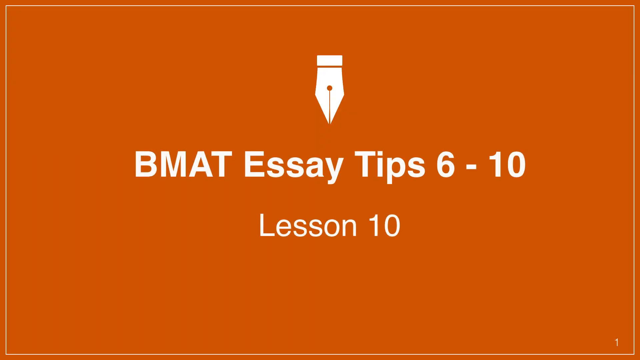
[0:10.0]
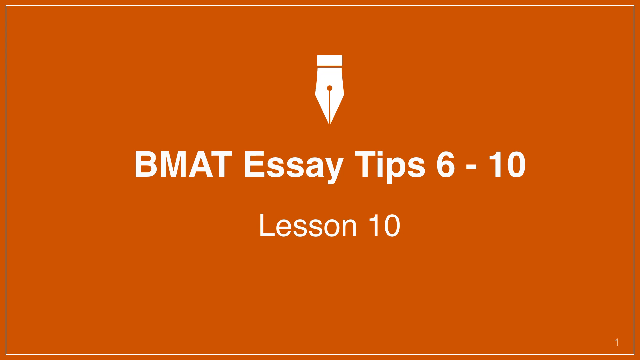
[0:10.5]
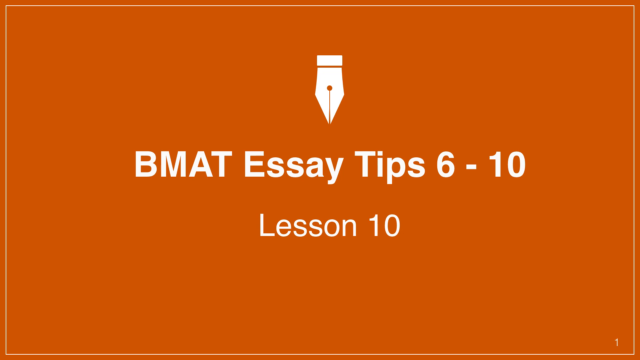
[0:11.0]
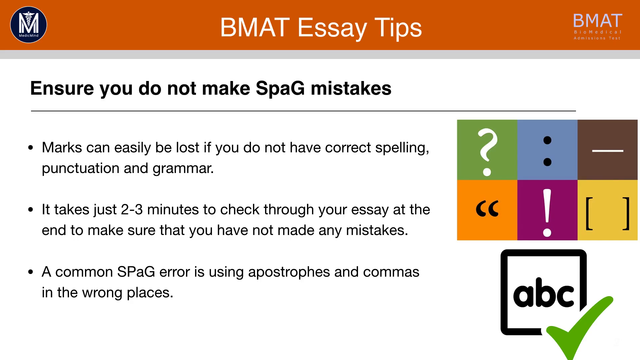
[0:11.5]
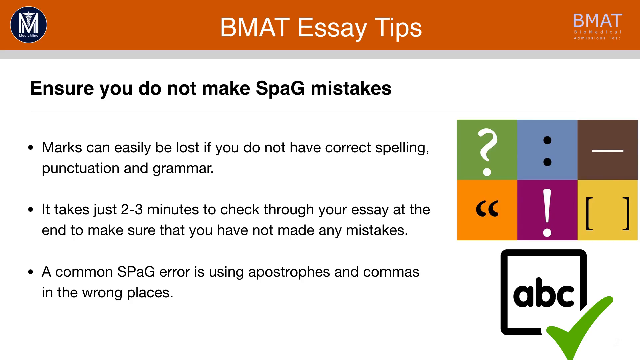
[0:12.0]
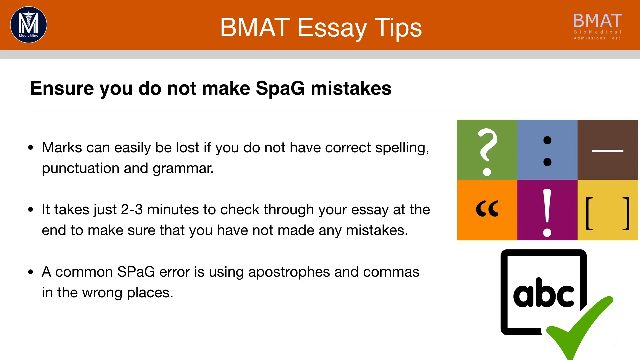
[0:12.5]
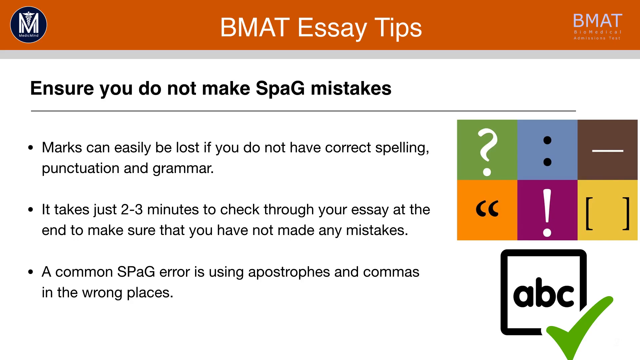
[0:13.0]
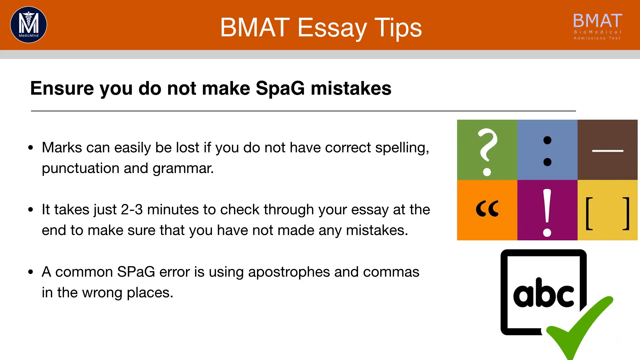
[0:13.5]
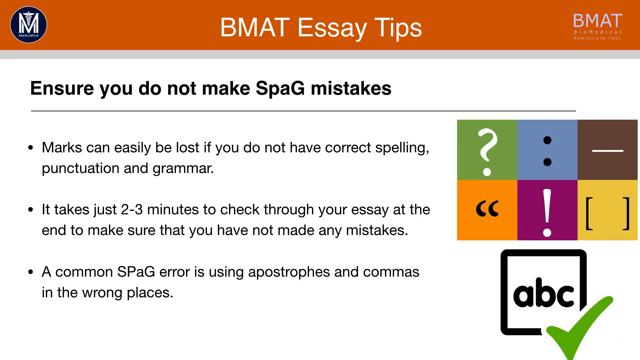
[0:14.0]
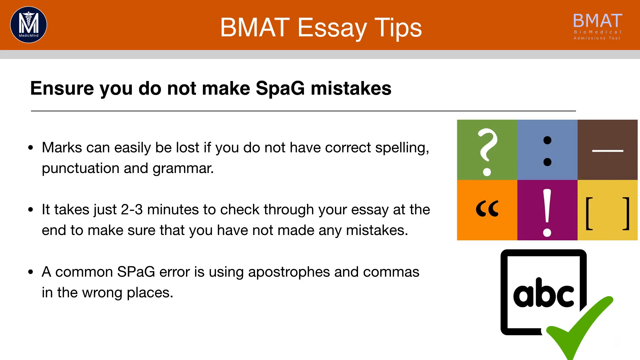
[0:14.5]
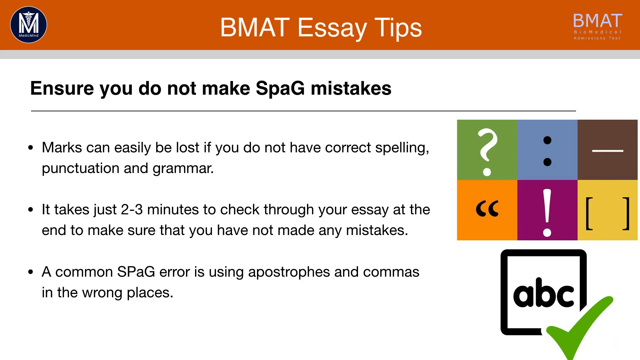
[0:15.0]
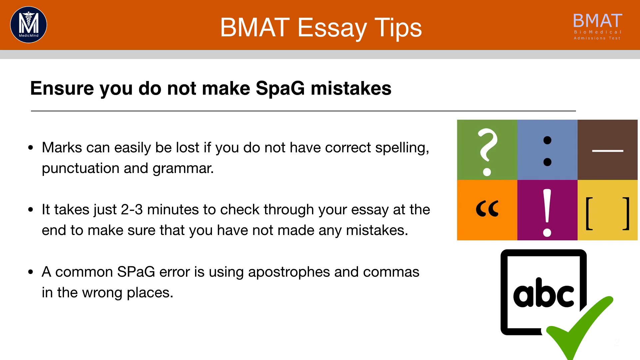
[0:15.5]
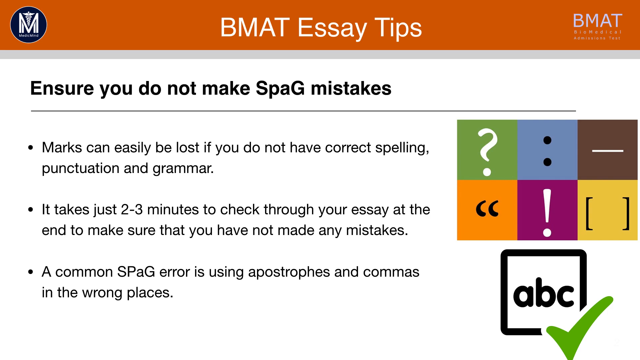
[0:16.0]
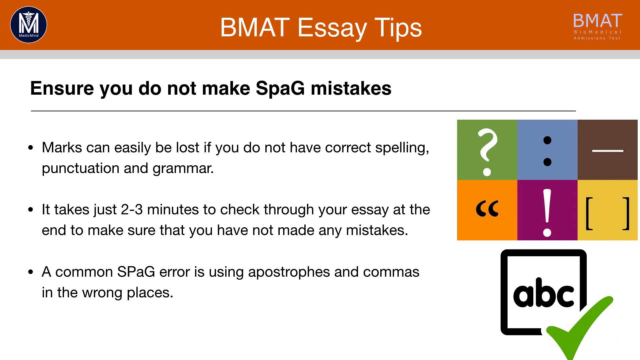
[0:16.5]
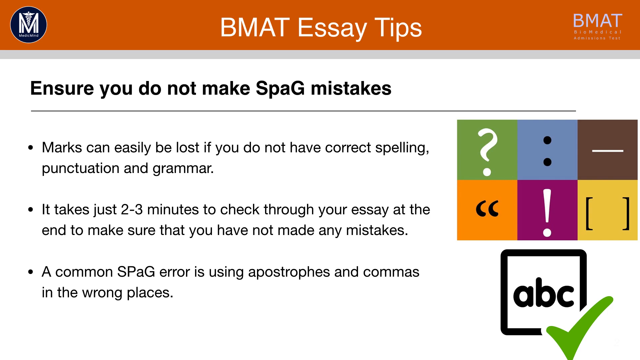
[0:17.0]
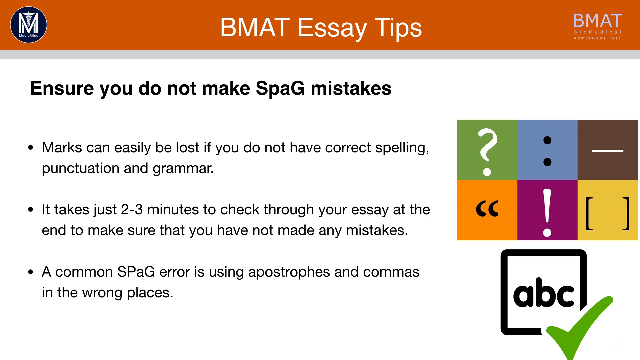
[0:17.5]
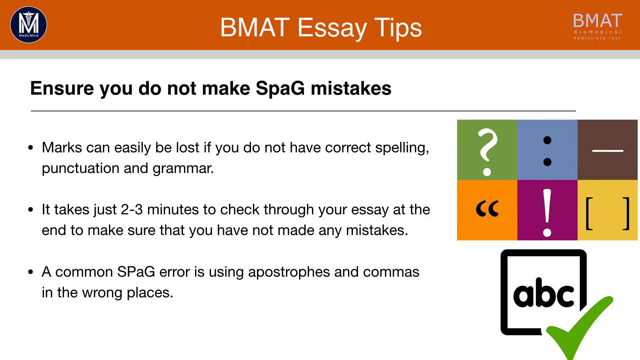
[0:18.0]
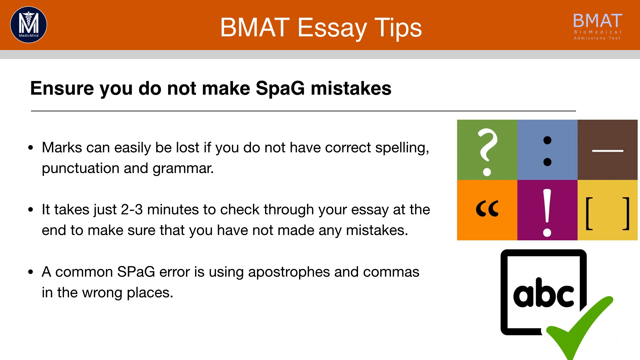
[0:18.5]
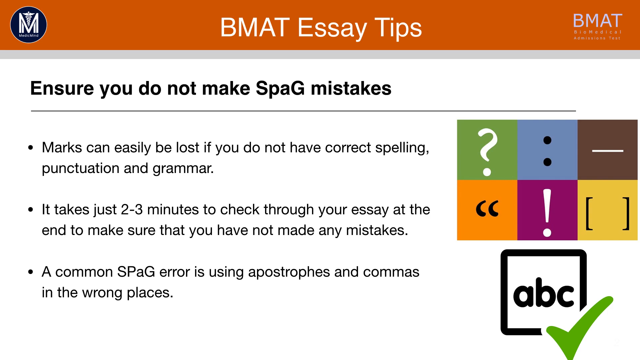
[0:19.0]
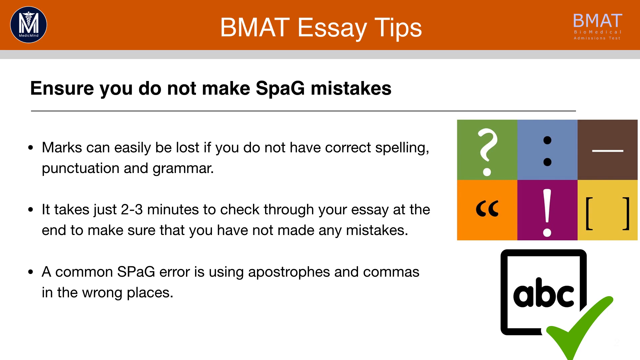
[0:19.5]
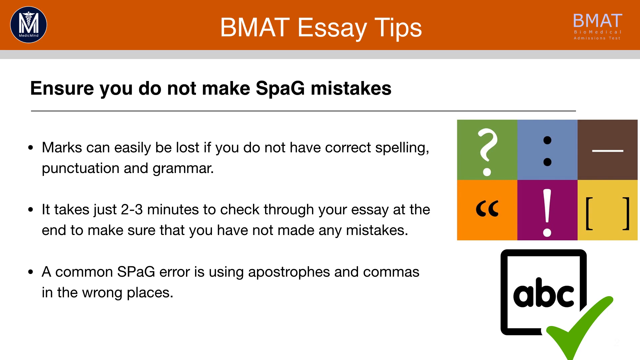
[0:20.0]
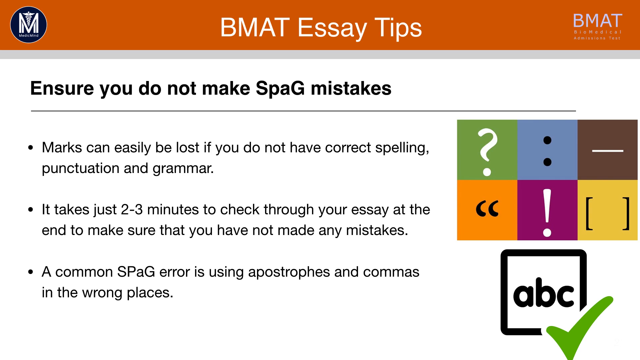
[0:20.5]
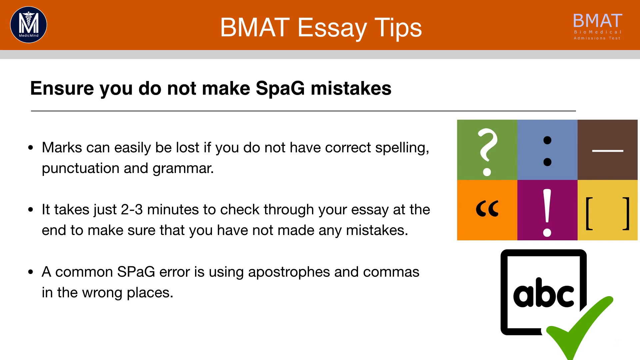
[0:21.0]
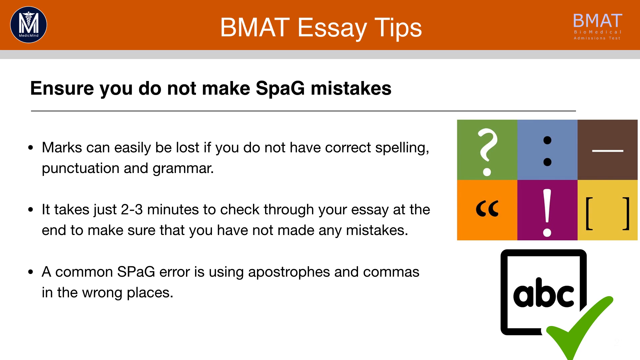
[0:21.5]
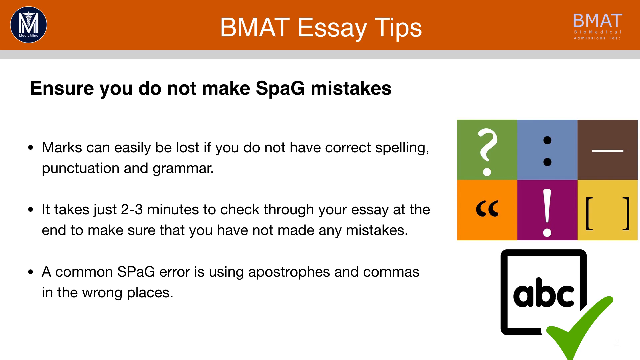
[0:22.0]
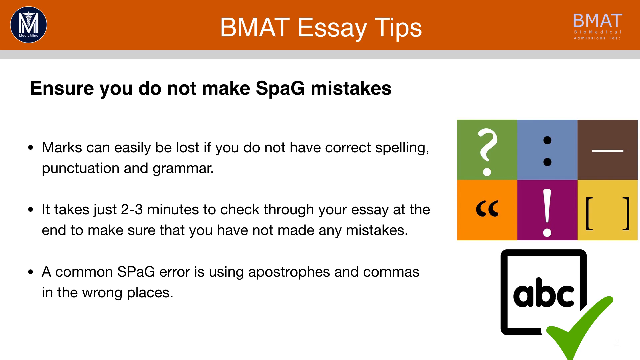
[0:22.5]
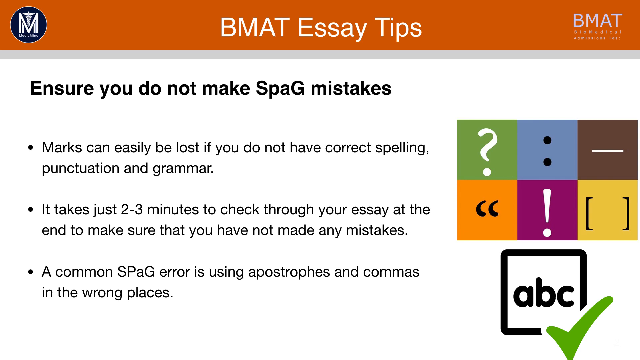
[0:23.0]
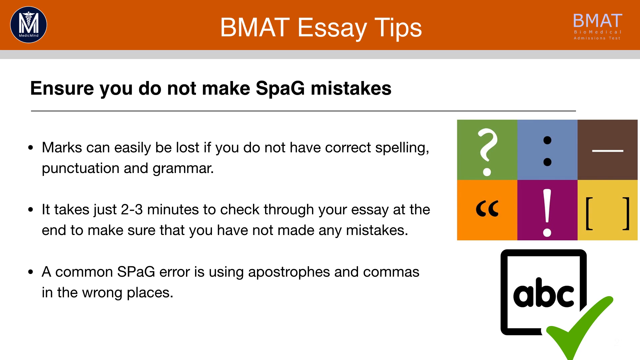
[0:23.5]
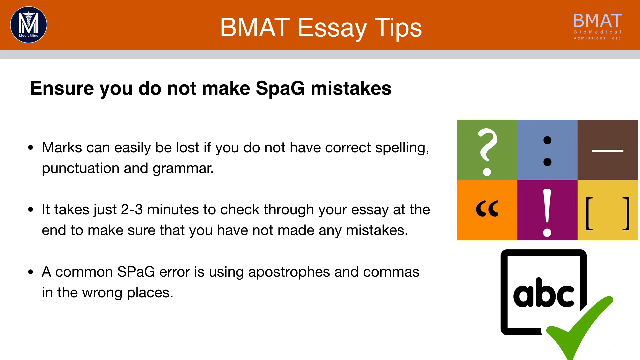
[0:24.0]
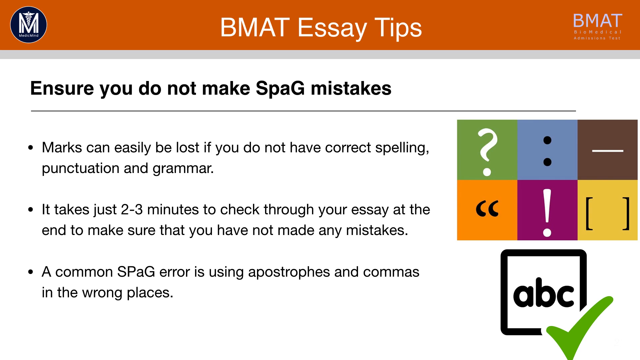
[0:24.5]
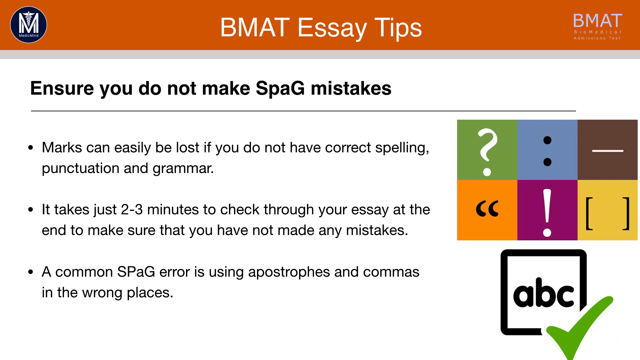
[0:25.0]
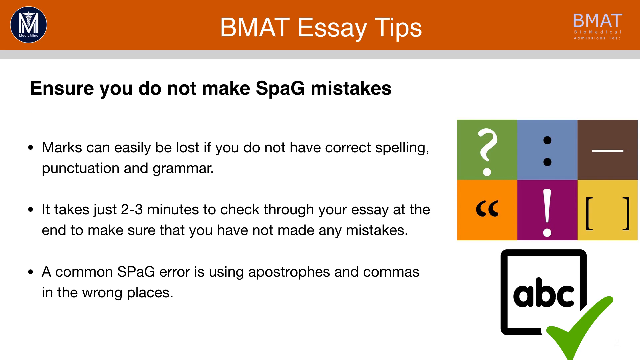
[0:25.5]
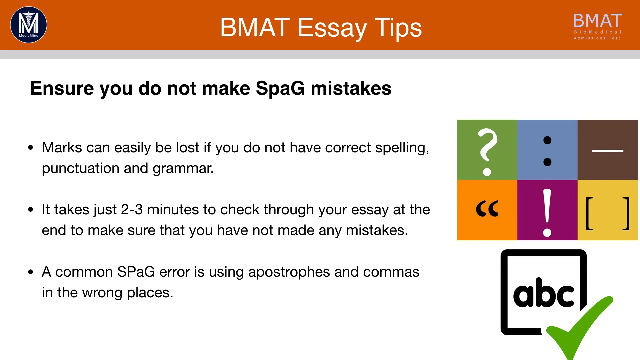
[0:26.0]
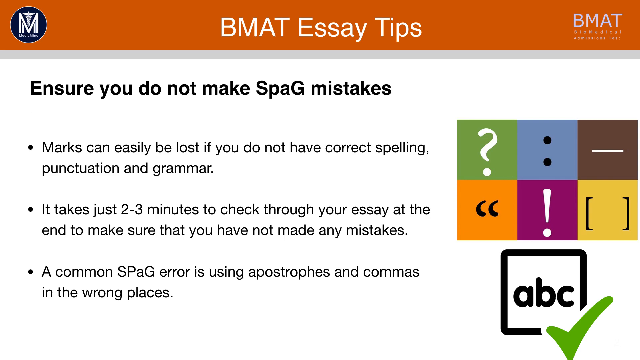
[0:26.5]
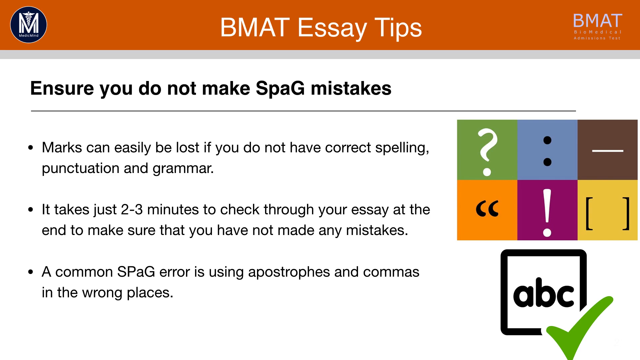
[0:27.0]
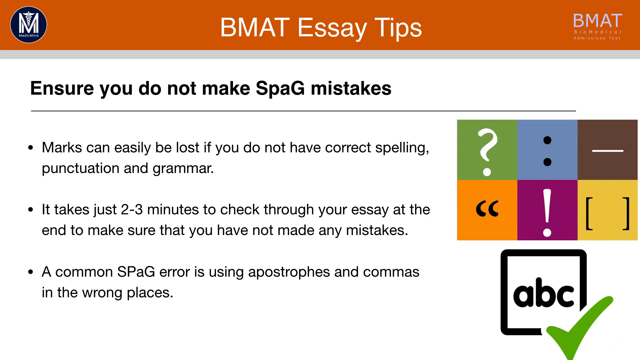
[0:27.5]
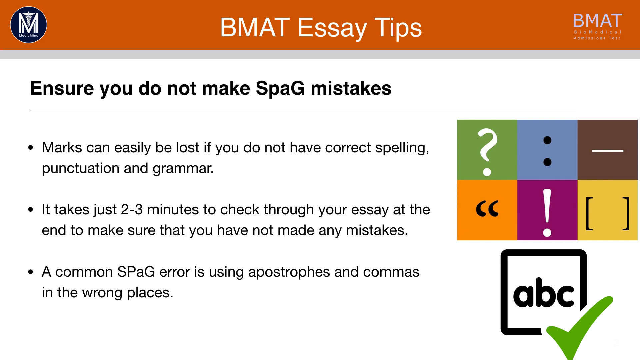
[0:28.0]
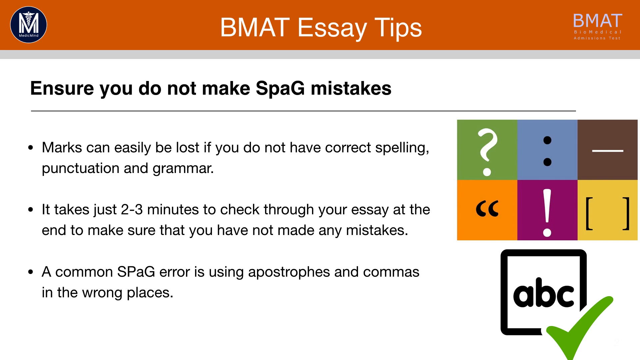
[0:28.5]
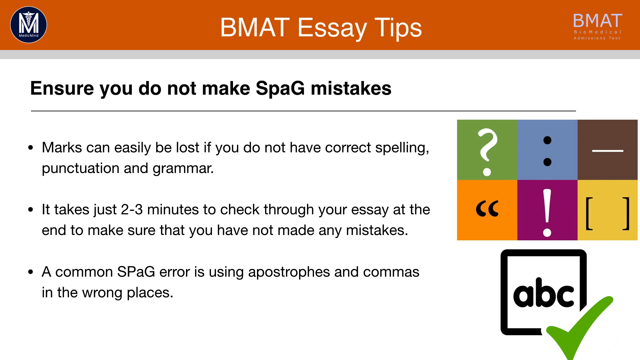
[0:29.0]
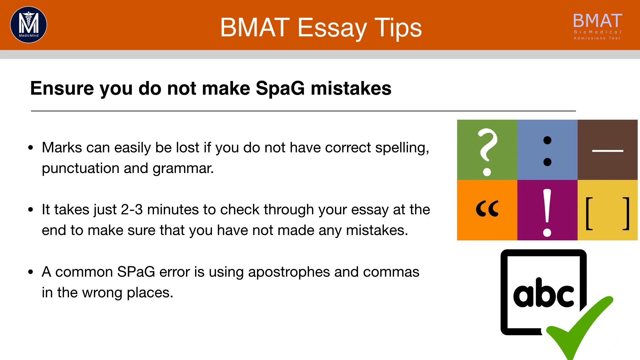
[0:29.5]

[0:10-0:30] The orange screen shows "BMAT essay tips 6-10" with "Lesson 10" in text and a writing utensil logo at the top. It quickly transitions to a slide-like presentation image reading "BMAT essay tips" at the top, with black text underneath reading "ensure you do not make SPAG mistakes". The logo from the very start is at the top left, and the top right reads "BMAT". There are three bullet points of information, and on the far right of the screen are six different logos or icons with an ABC icon below. The icons include grammar and punctuation signs such as a question mark, a semicolon, an exclamation point and brackets. Most of the slide is white except for the orange overlay at the top, with black text underneath, the bullet points, and the visuals on the right side. The slide remains on screen for the rest of this section.